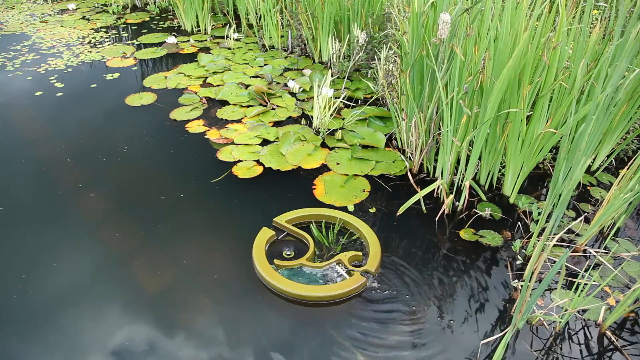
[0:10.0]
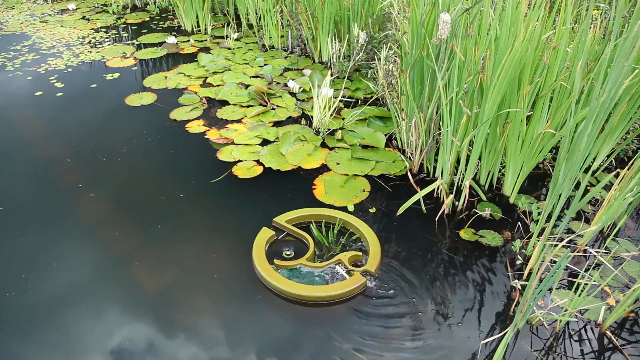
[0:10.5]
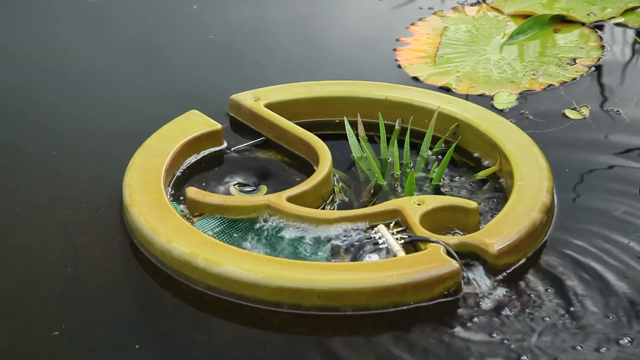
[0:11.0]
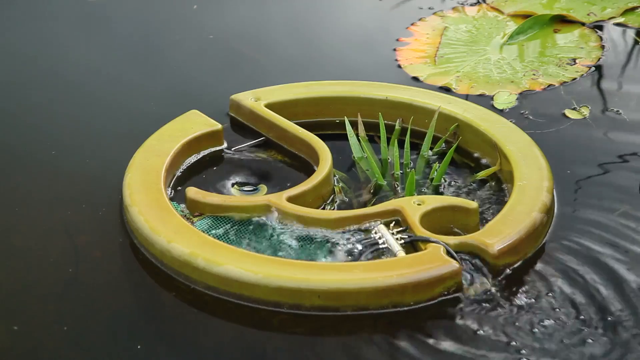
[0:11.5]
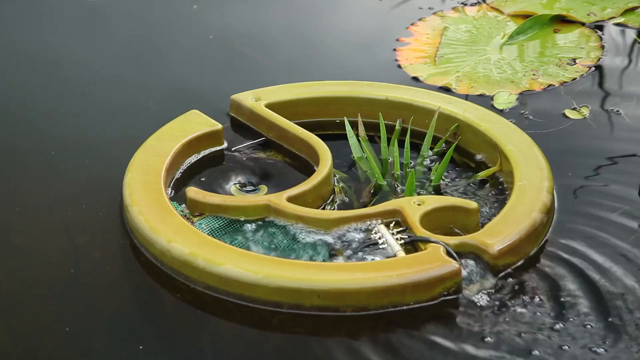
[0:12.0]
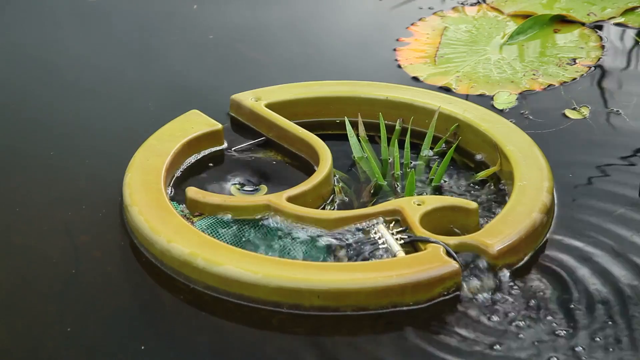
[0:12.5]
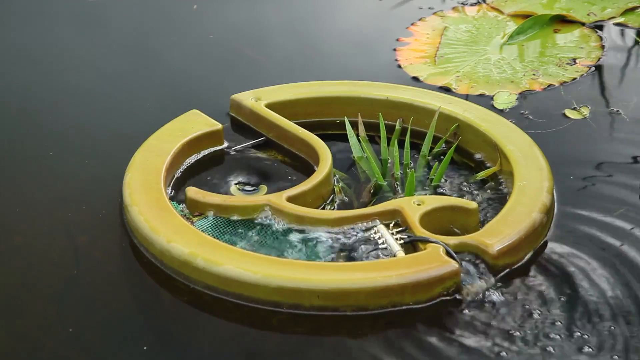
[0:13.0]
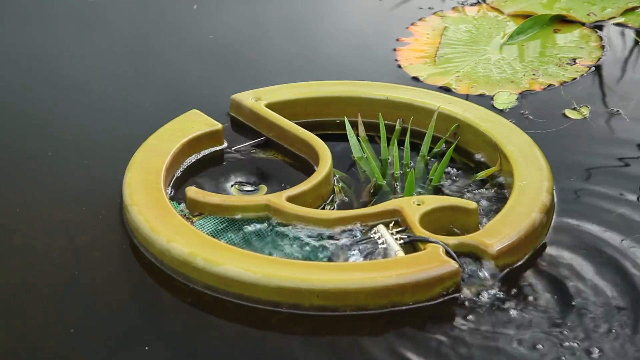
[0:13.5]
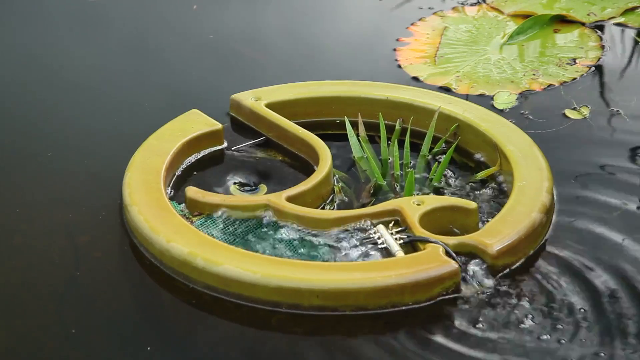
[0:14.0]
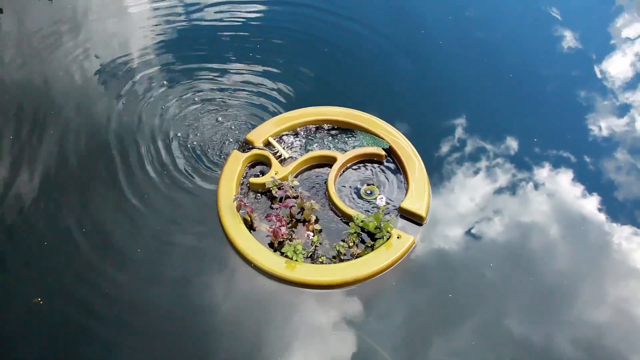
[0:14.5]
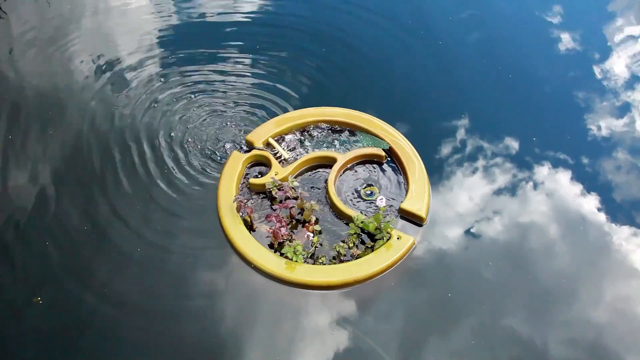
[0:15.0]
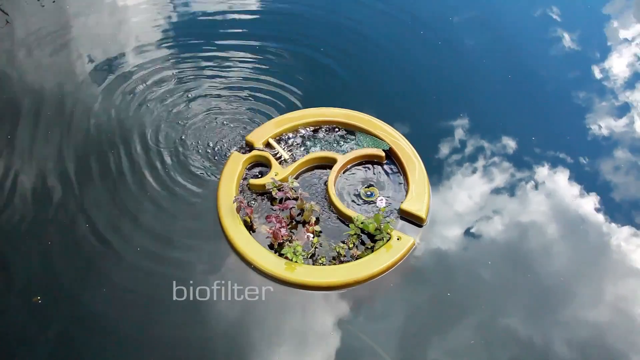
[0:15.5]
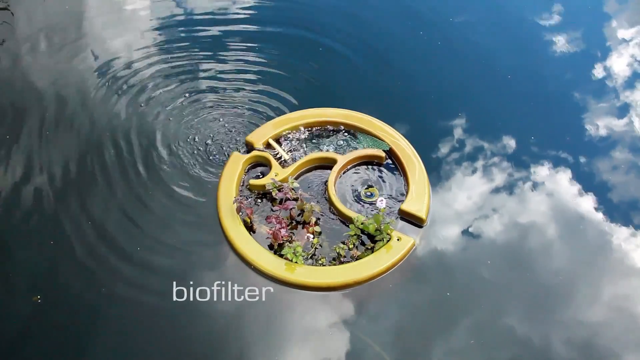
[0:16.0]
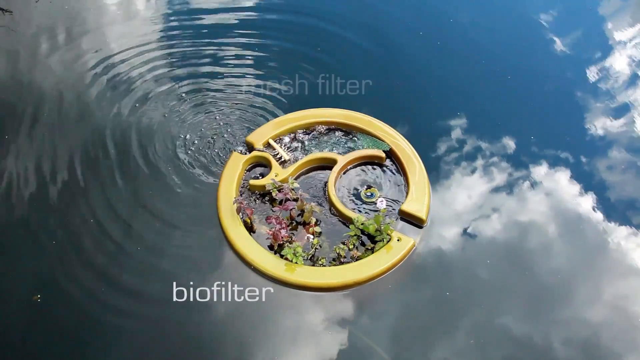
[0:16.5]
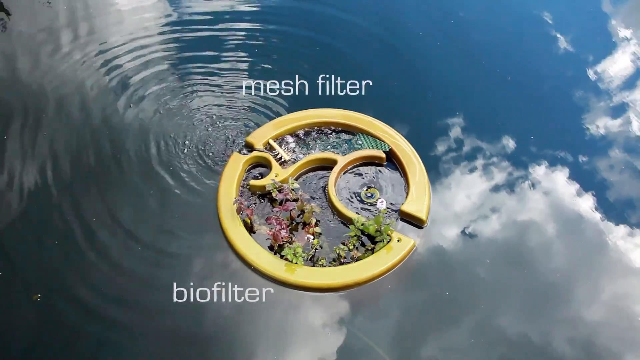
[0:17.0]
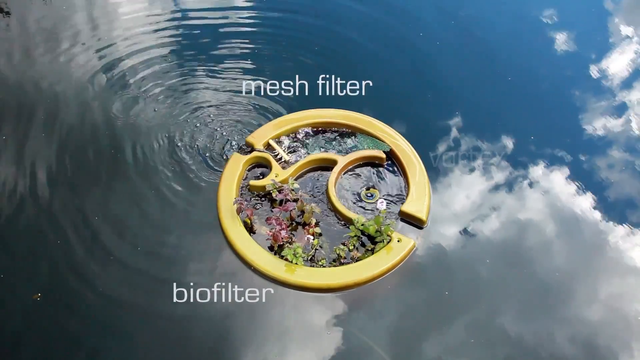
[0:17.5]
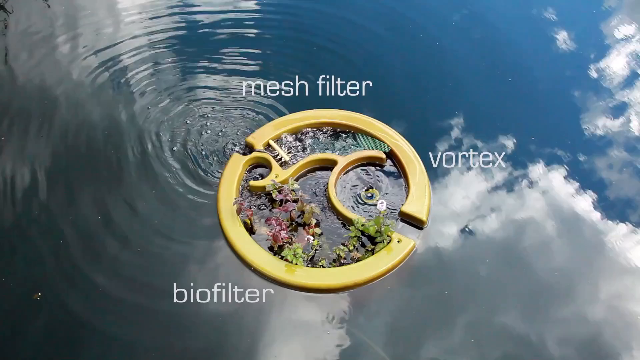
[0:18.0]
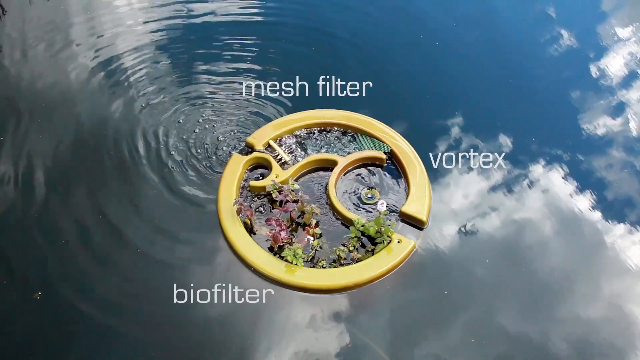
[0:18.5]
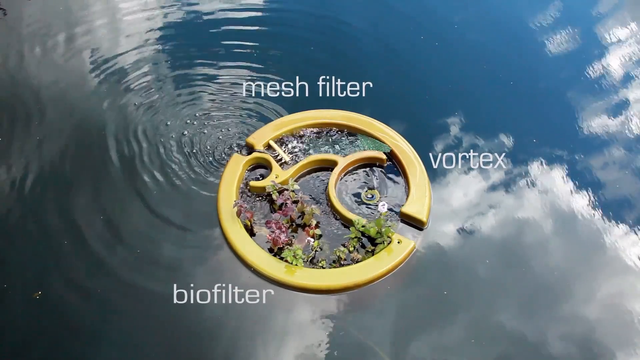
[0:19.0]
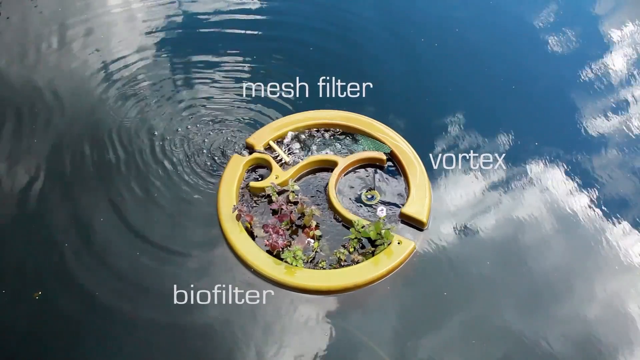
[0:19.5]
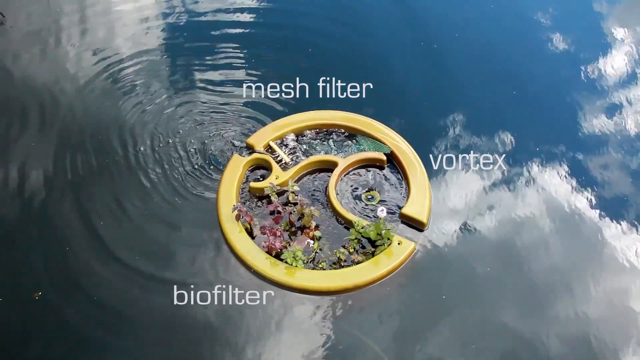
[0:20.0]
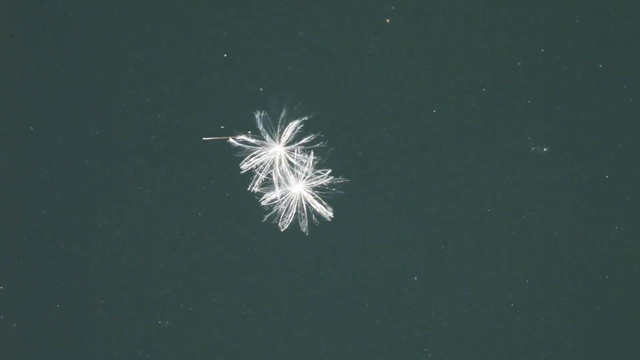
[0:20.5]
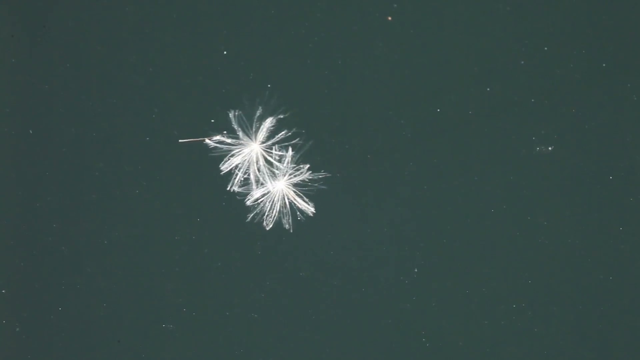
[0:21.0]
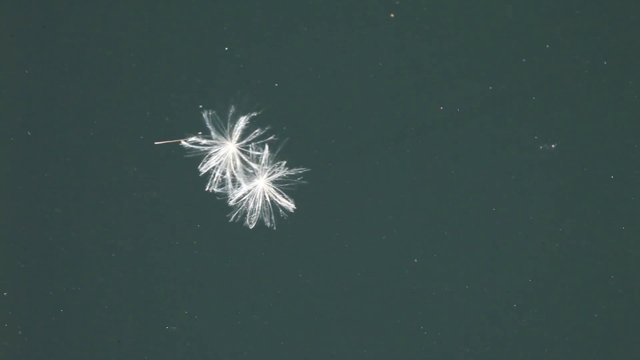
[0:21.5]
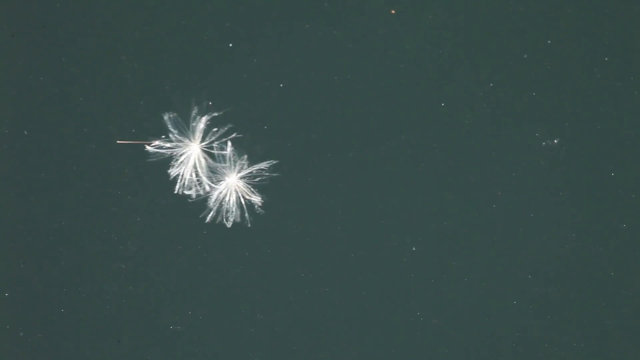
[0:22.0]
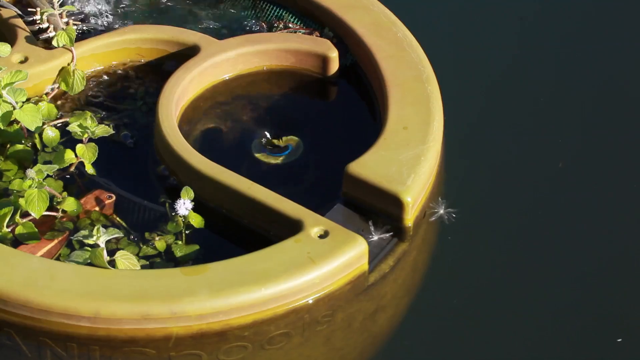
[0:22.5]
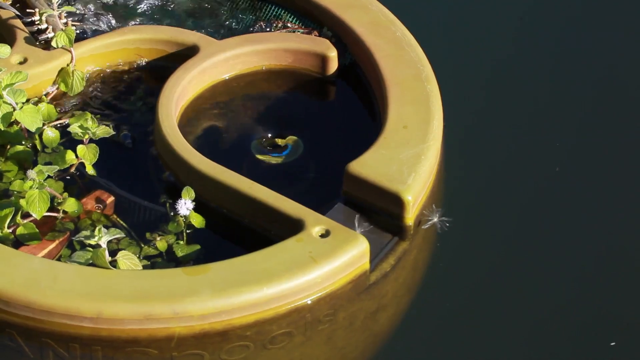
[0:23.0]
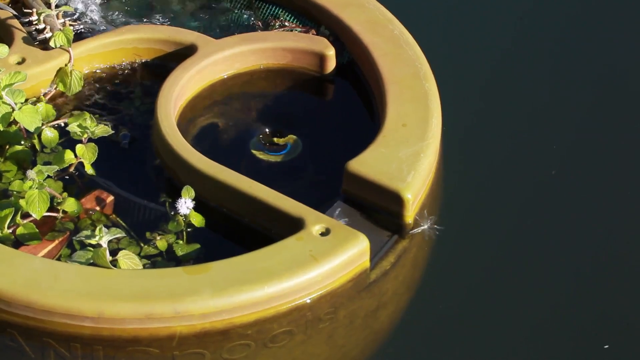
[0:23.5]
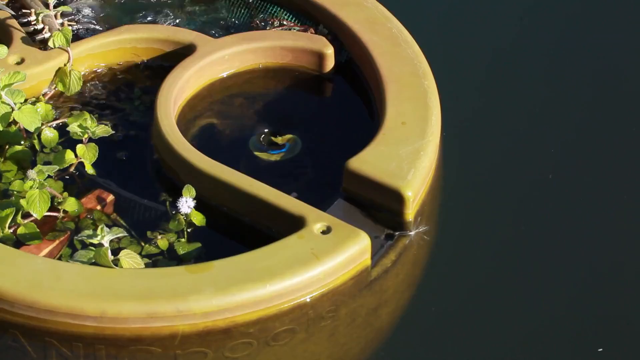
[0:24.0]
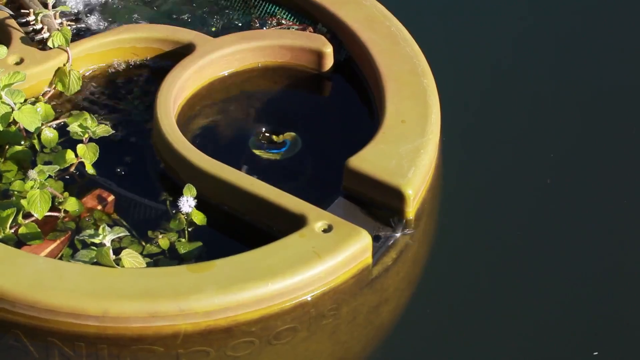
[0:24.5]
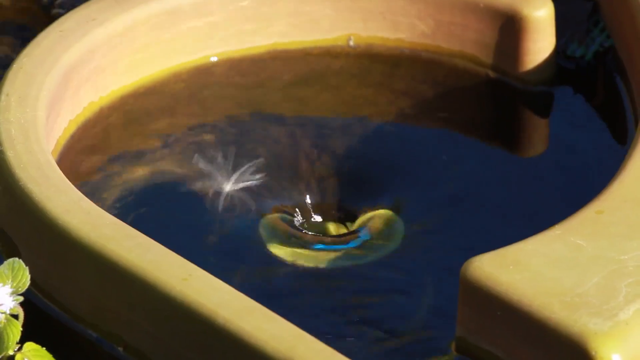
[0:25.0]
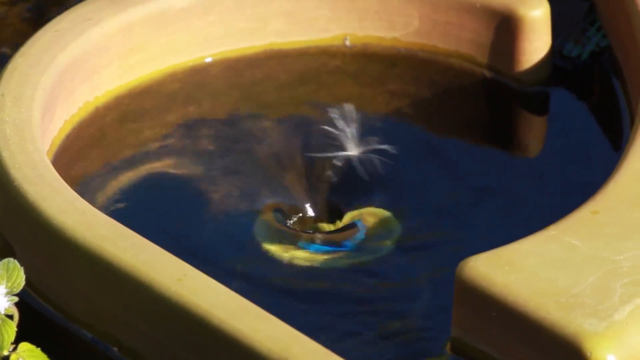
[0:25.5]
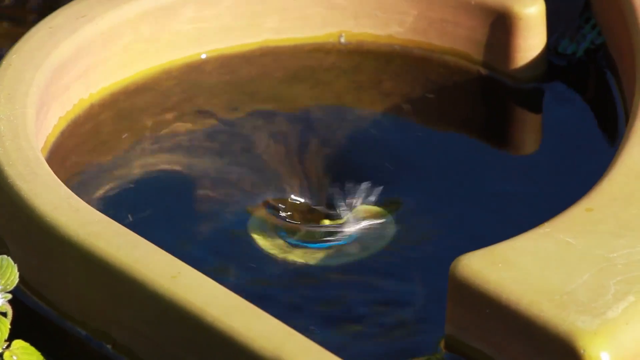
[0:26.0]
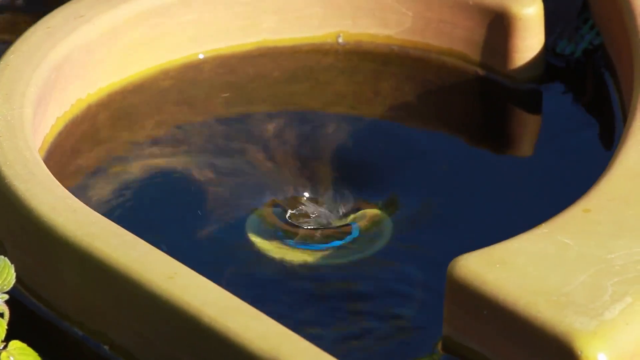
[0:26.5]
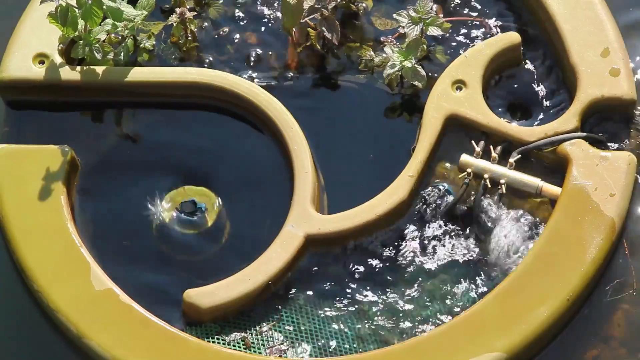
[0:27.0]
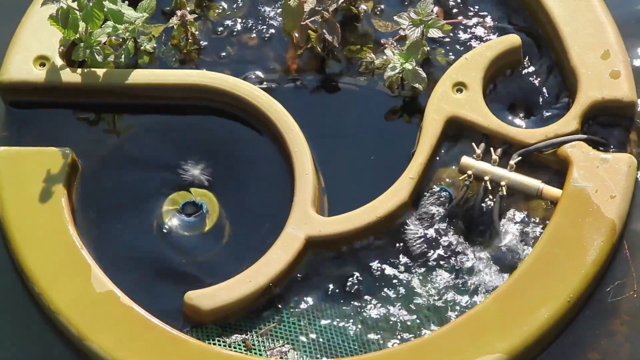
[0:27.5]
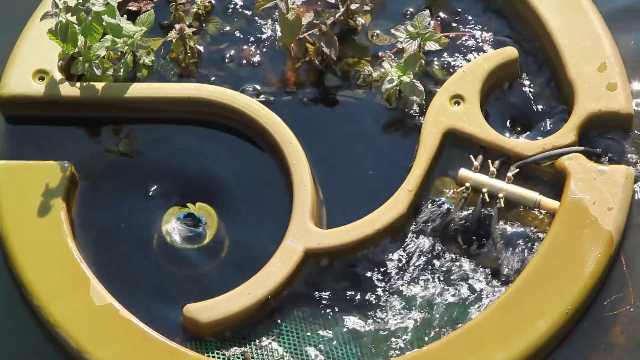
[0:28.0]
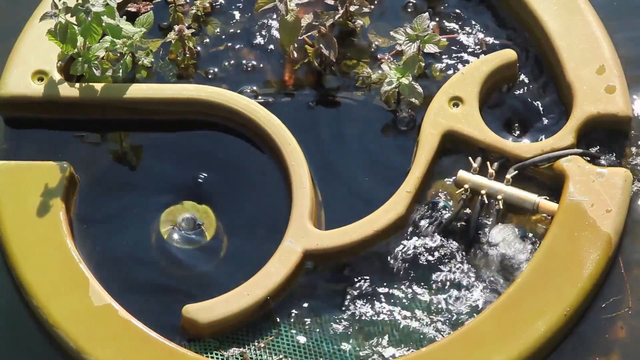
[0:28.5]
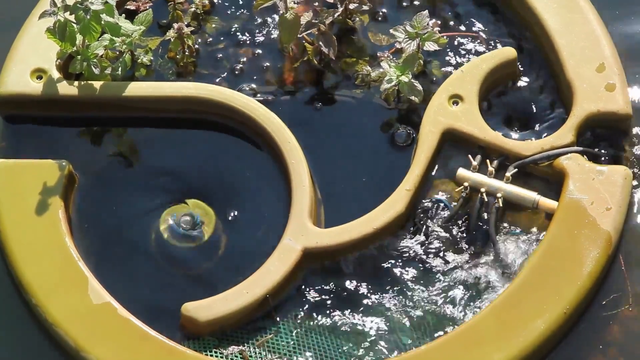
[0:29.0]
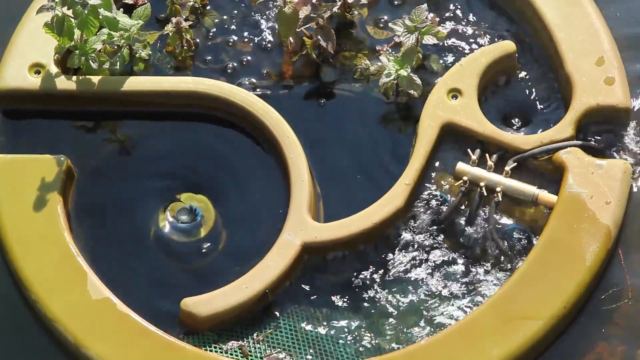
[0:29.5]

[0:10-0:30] An object with a unique design on top seems to be submerged in the water, with bubbles coming out into the water. There is grass, or possibly reeds, with some flowers, and there are plants with circular leaves in the water. The video moves closer to the object, which is divided into parts: one part has some plants with water moving inside it, and another part has water moving in a circular way. Beside it there is a plant with a circular leaf. The video then shows the object from another angle, with the sky reflected in the water. Bubbles come out of the object, and the object is labeled with "biofilter", "mesh filter" and "vertex". Something white moves on top of the water, enters the object, moves with the water flow to the part where the water moves in a circular way, and goes downward.